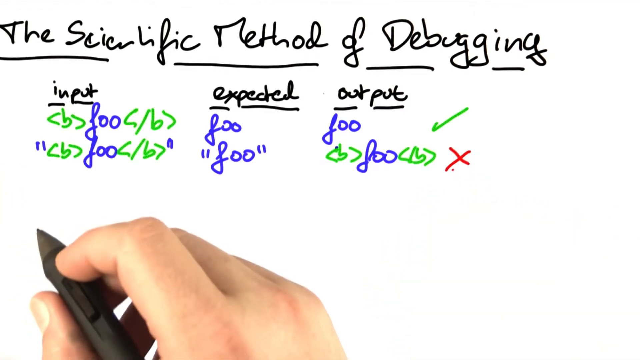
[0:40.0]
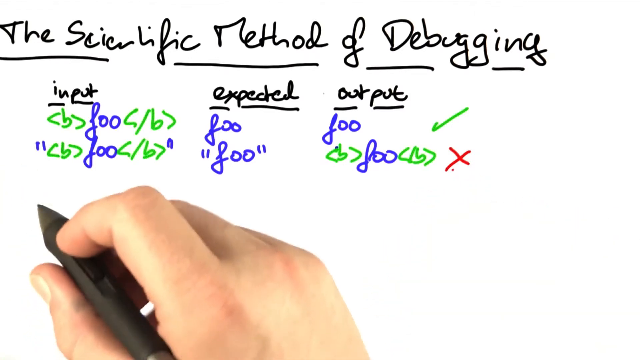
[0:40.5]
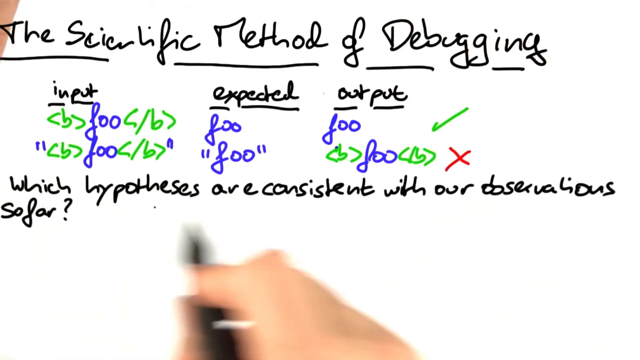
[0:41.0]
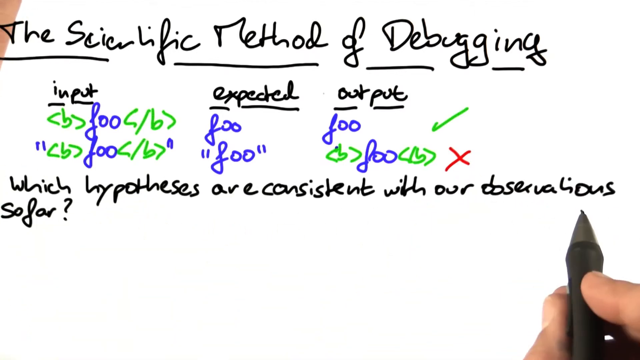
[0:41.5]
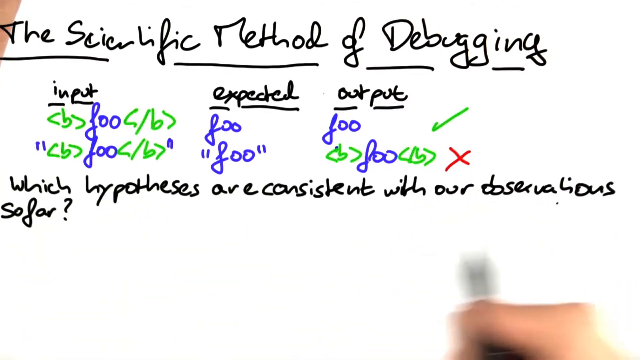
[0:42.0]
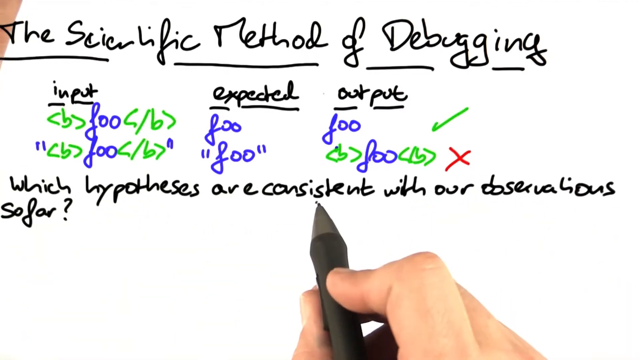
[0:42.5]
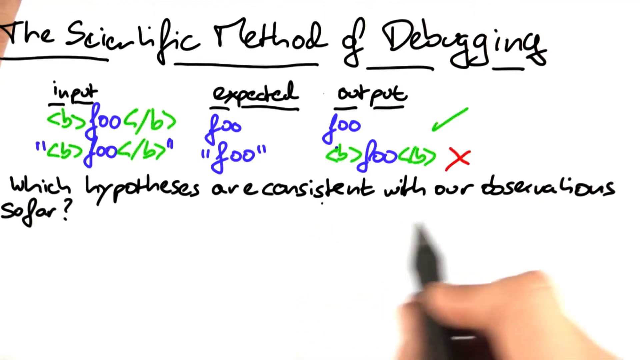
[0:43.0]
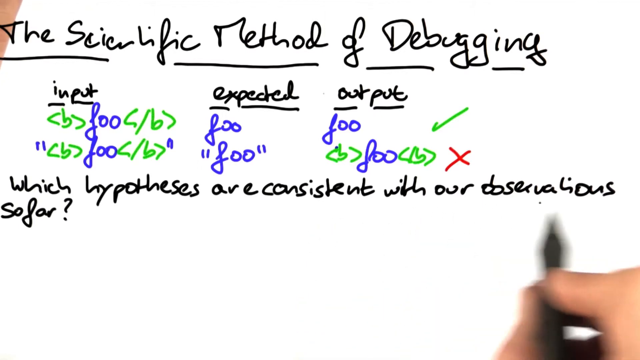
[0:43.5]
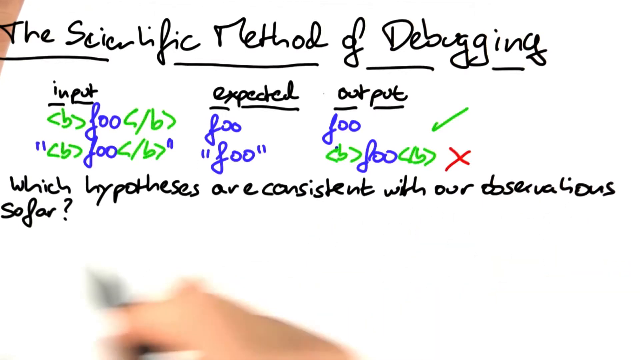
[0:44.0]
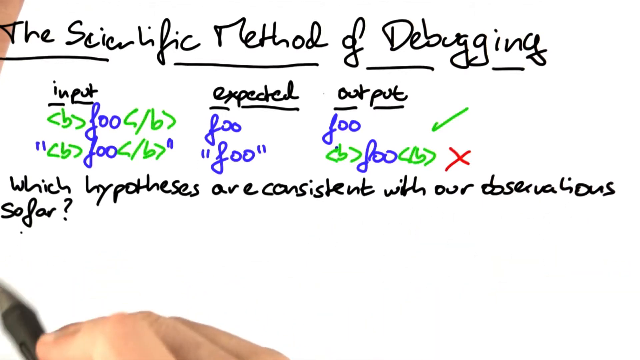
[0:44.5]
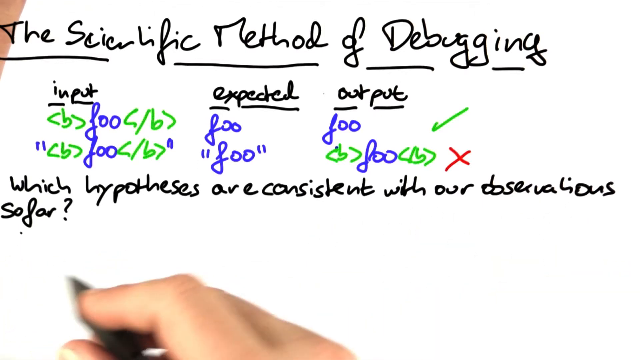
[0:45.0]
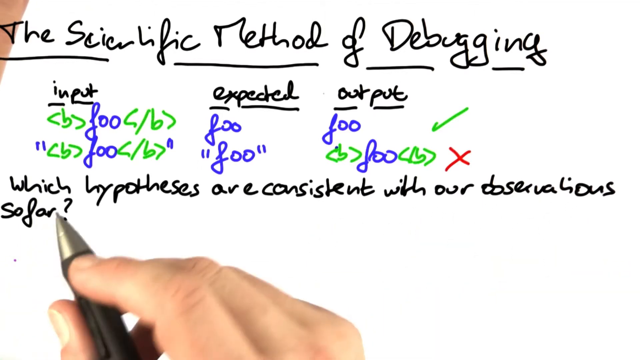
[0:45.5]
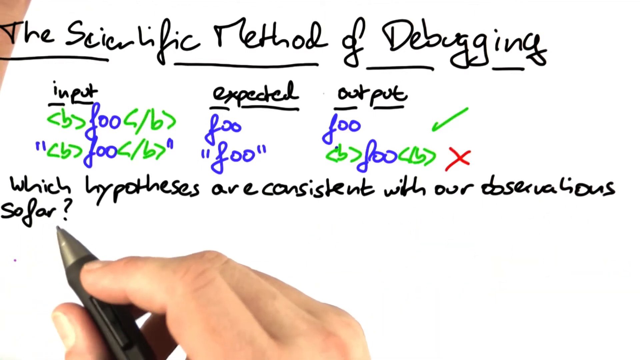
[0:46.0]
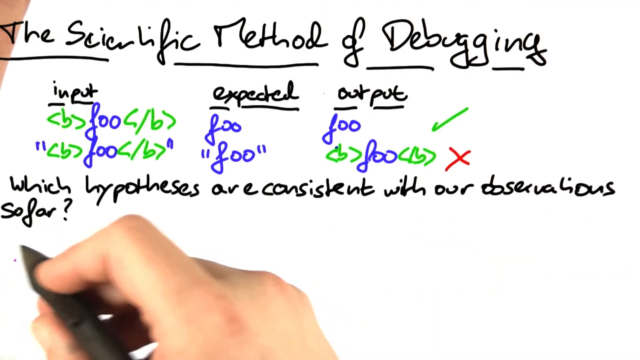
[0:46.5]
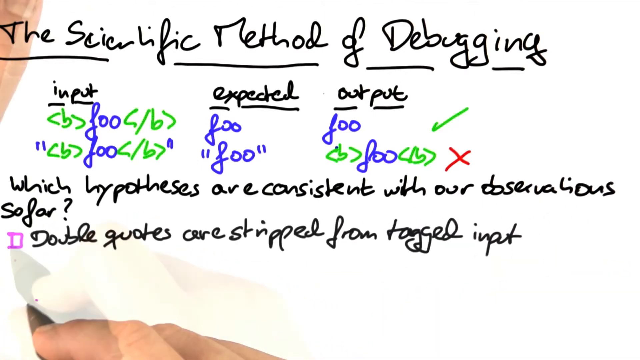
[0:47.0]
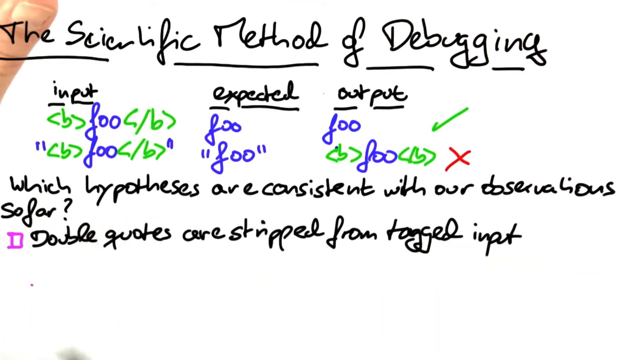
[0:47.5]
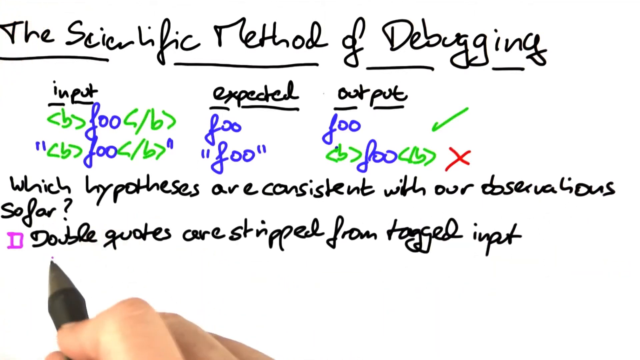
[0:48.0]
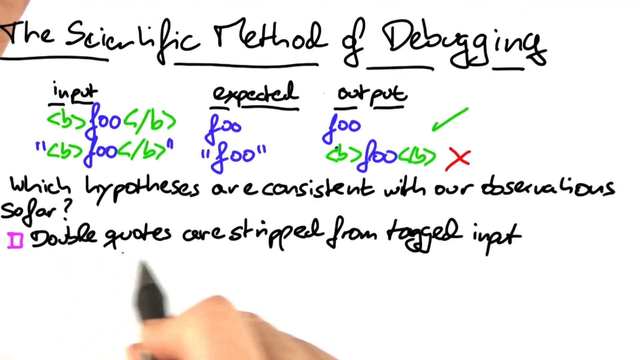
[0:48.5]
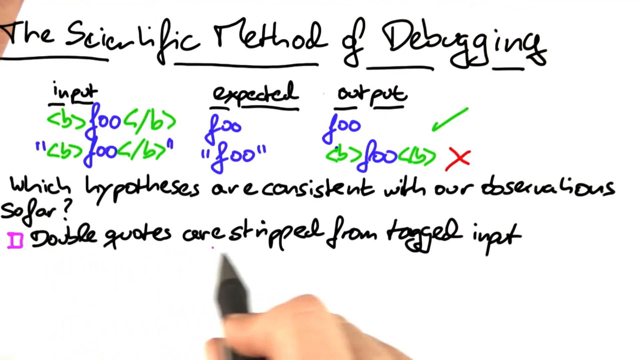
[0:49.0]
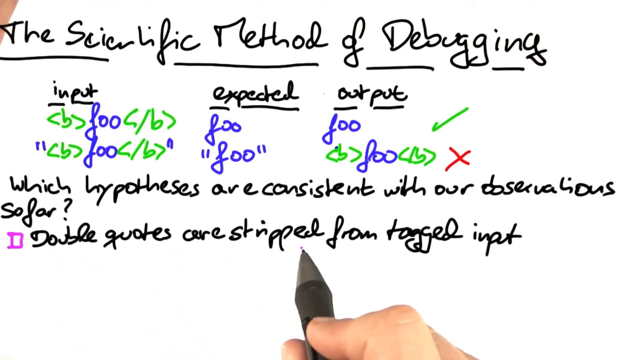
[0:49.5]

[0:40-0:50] The same layout remains, with the title "the scientific method of debugging" at the top. Under the inputs, expected values and outputs, a question reads "which hypotheses are consistent with our observation so far?" The person makes an underlining gesture along the question, probably explaining it. Below it, he writes a statement beginning "double quotes are stripped from", with a checkbox to its left. Above, the input column shows bracketed foo and slash b in brackets, and below that, quotation marks containing b in brackets, foo, and slash b in brackets. On the right, under expected, the first entry is foo and the second is foo in quotation marks. Under output, the first is foo and the second is b in brackets, foo, slash b in brackets. The first is marked correct and the second incorrect.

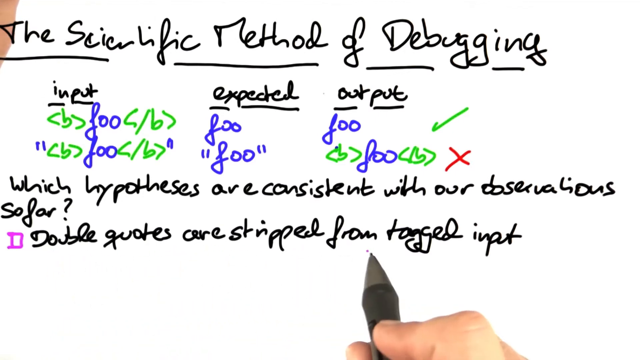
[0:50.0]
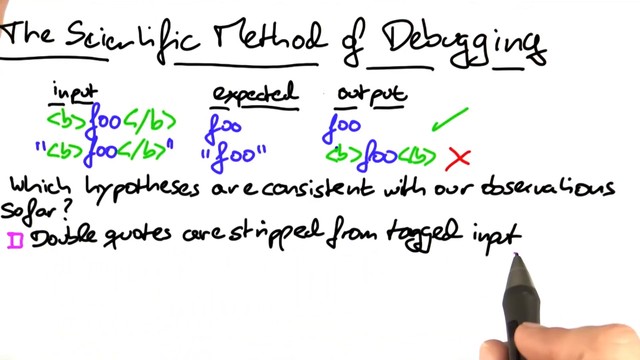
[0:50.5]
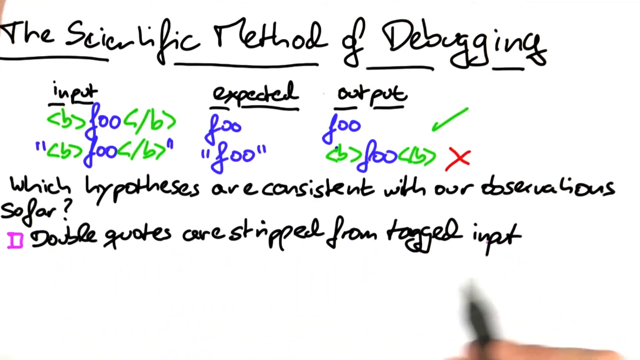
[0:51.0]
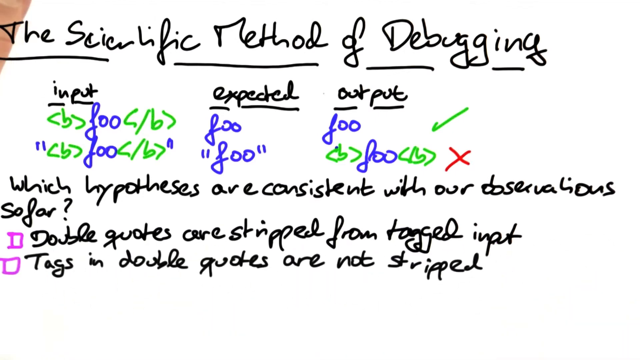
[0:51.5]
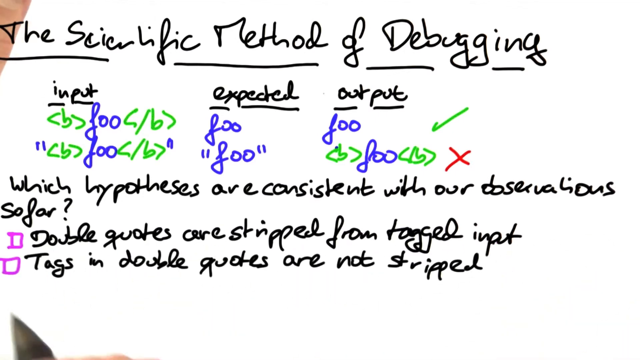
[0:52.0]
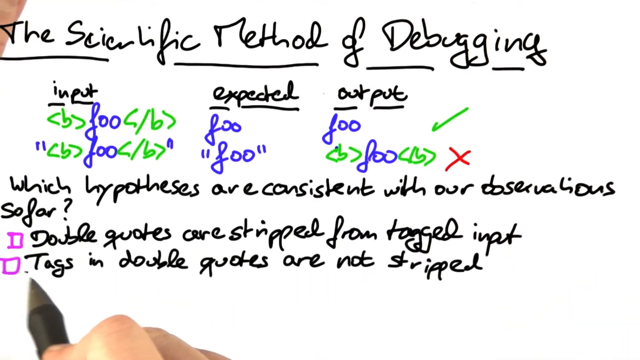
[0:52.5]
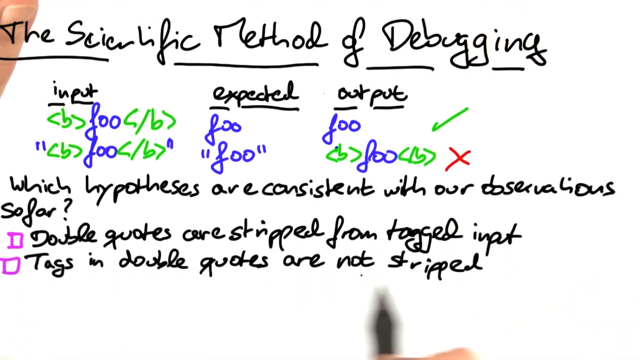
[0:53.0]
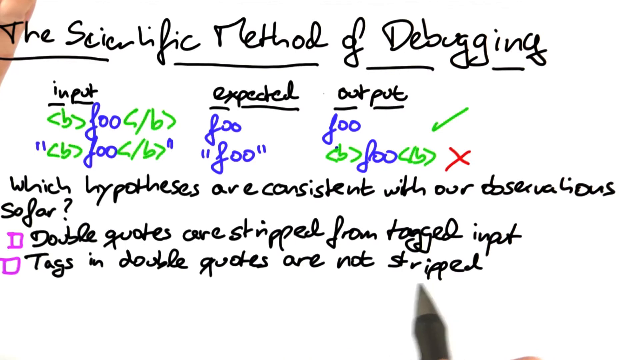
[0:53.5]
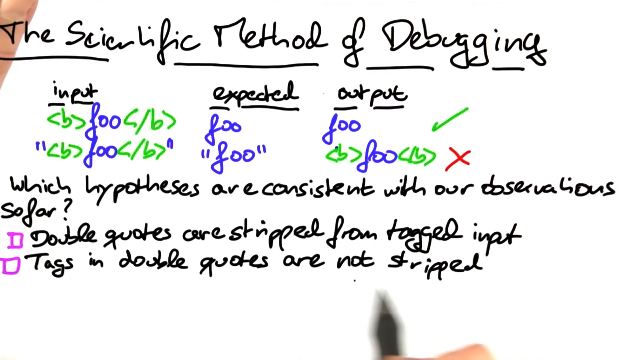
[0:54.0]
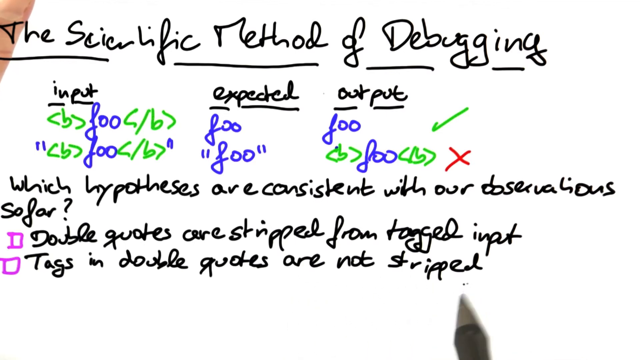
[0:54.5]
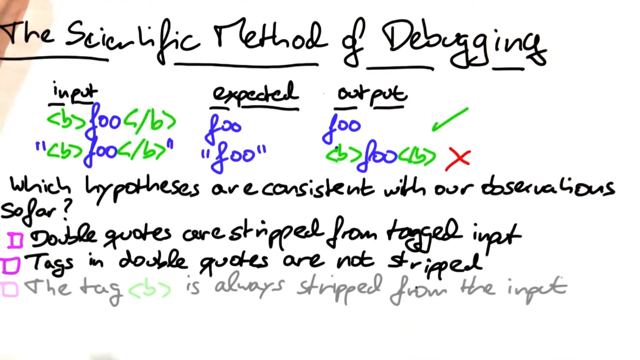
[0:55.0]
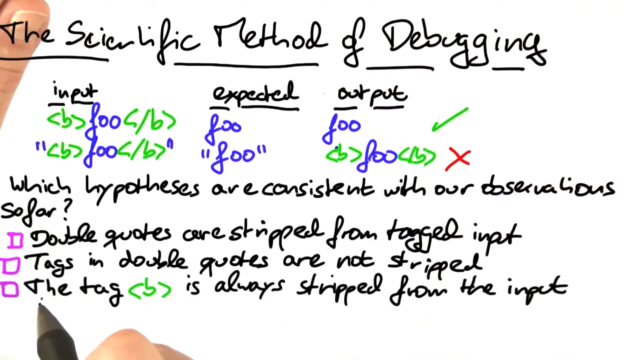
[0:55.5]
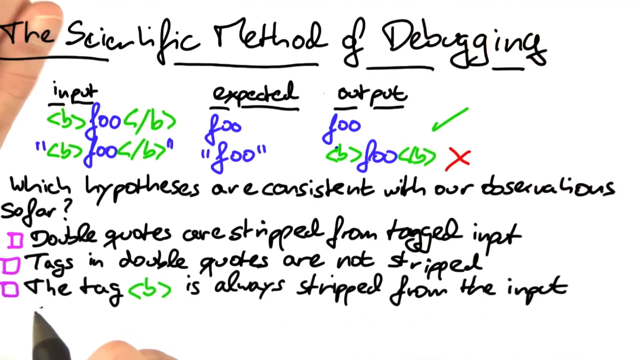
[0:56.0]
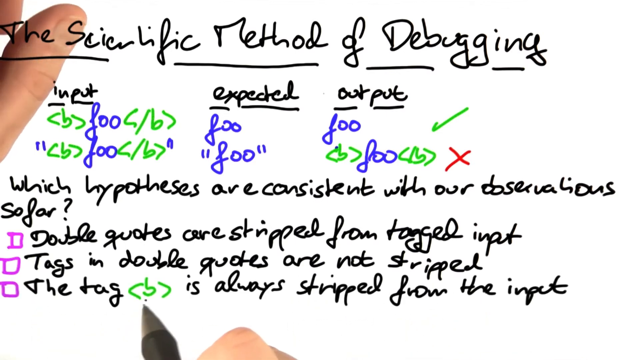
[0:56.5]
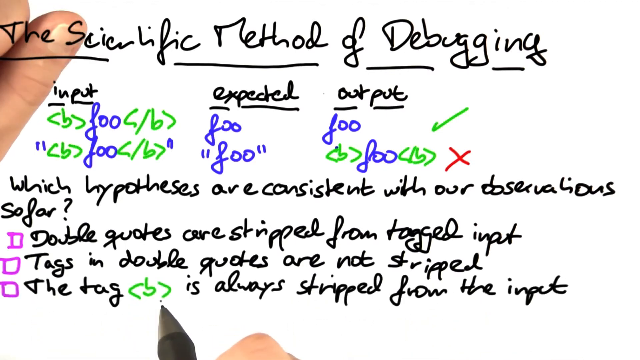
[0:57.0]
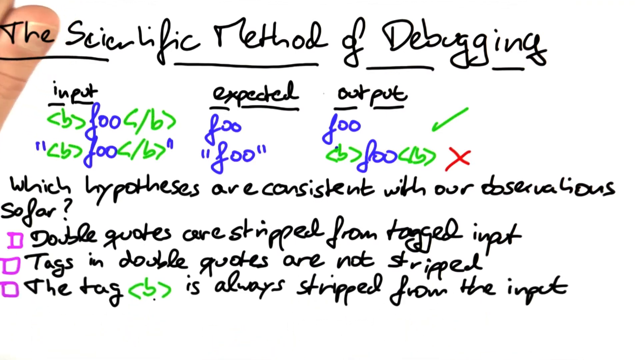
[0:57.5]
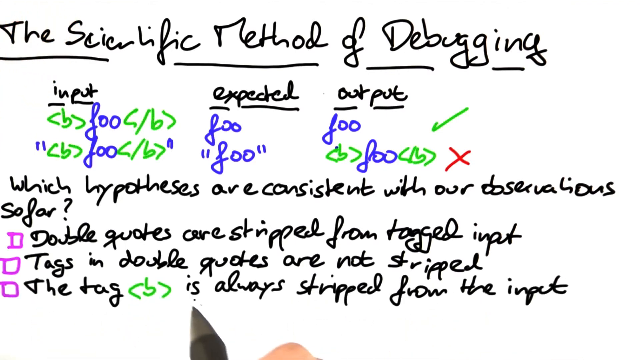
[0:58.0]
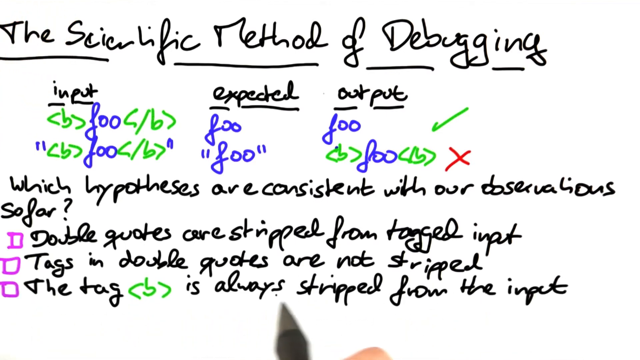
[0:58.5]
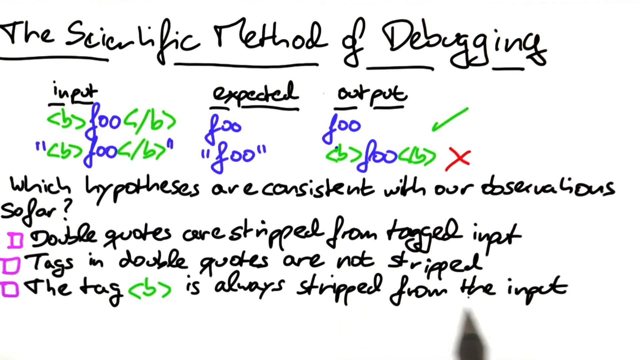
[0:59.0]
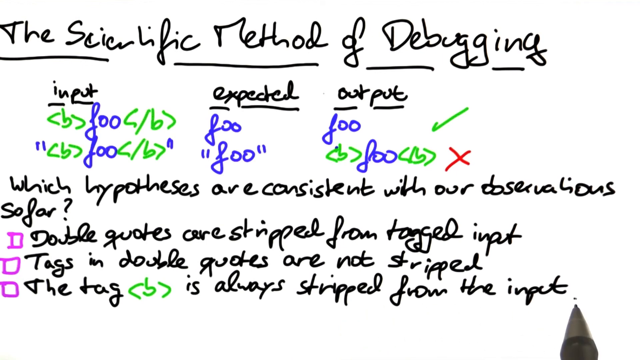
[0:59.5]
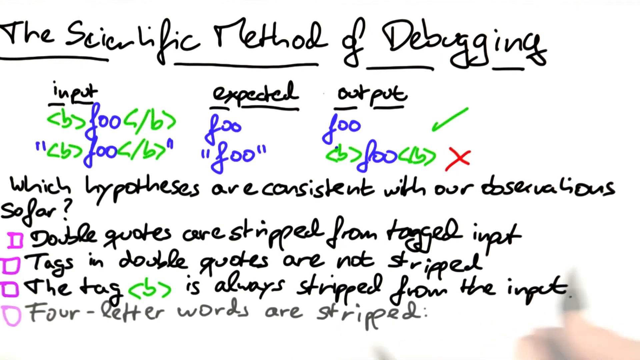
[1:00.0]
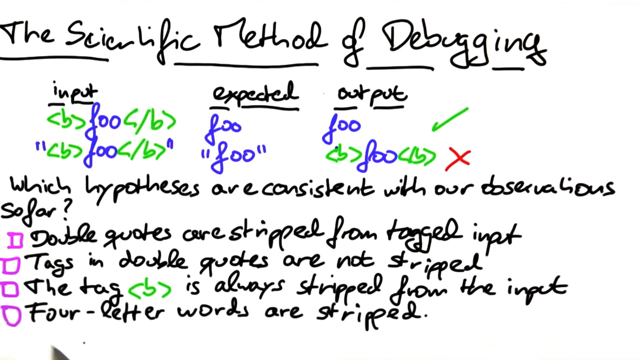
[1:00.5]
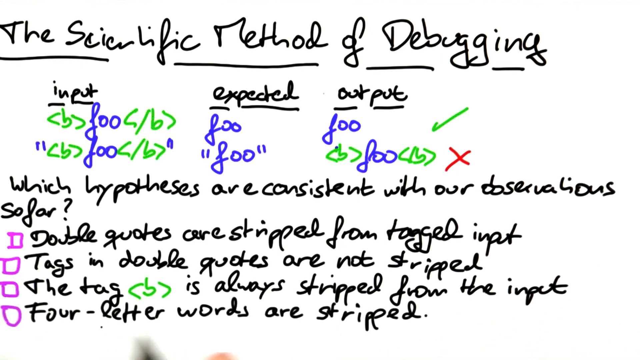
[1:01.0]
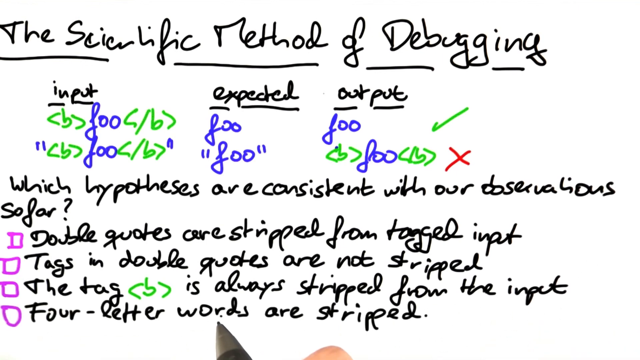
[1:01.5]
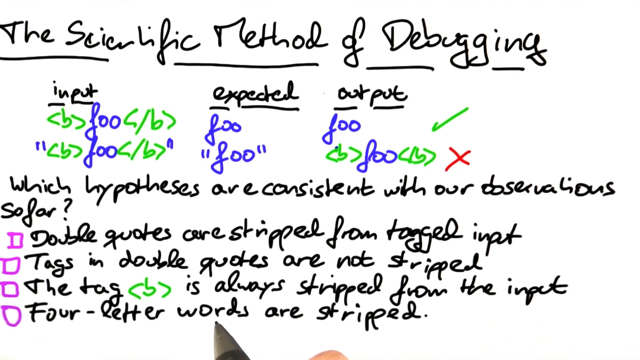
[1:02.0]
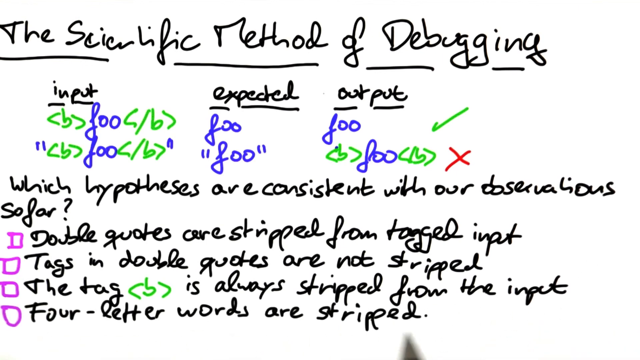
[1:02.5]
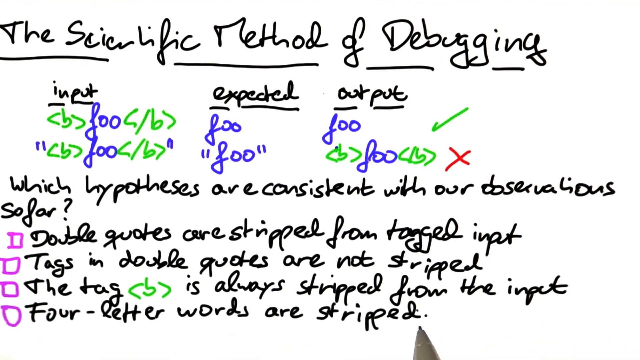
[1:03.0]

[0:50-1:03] The person underlines the first checkbox and its sentence, probably explaining something. Another sentence with a checkbox appears, reading "tags in double quotes are not stripped," and he makes the same underlining gesture along it, probably explaining. A third checkbox appears with a sentence saying the tag b in brackets "is always stripped from the input," and he again makes an underlining gesture, probably explaining it. Then a fourth appears, reading "four letter words are stripped."